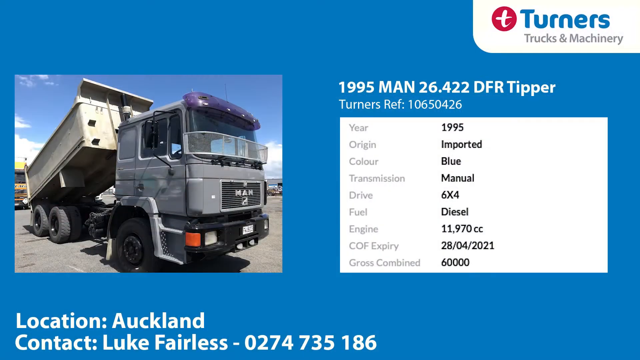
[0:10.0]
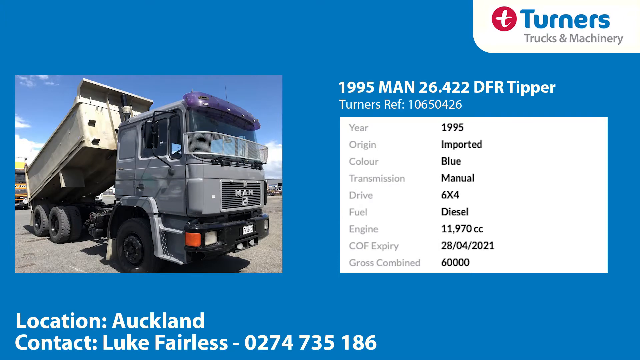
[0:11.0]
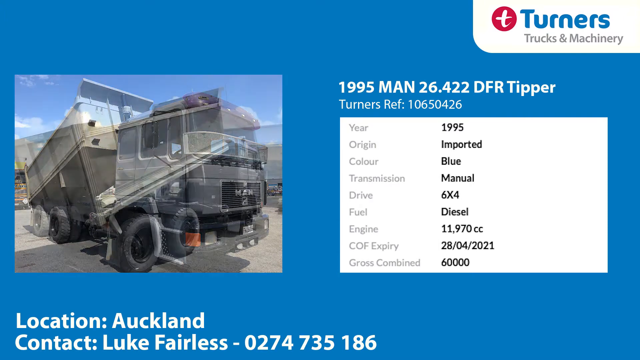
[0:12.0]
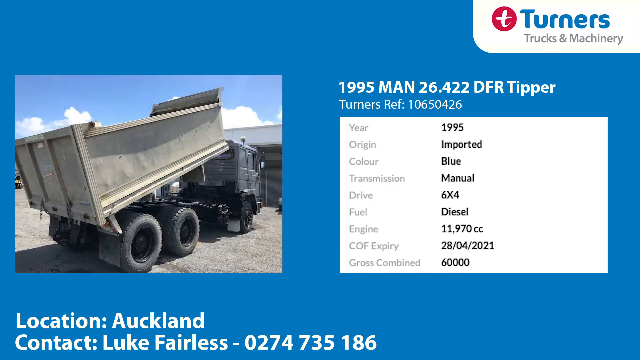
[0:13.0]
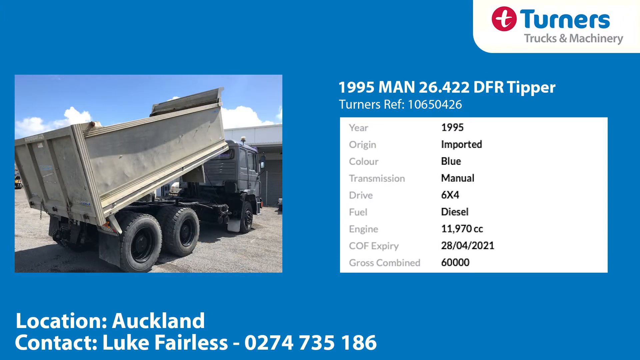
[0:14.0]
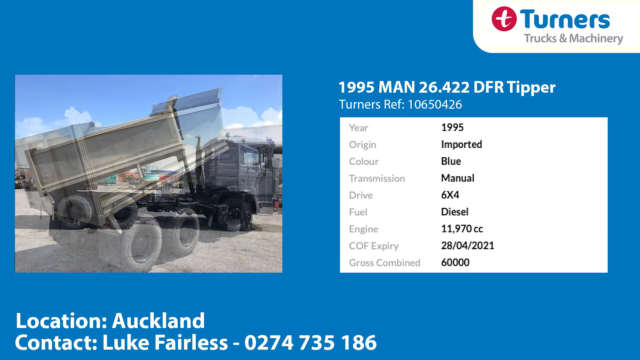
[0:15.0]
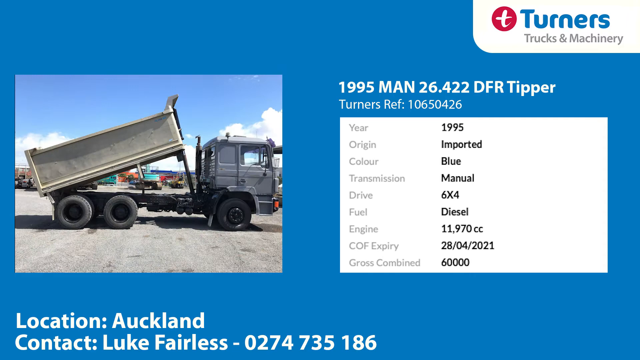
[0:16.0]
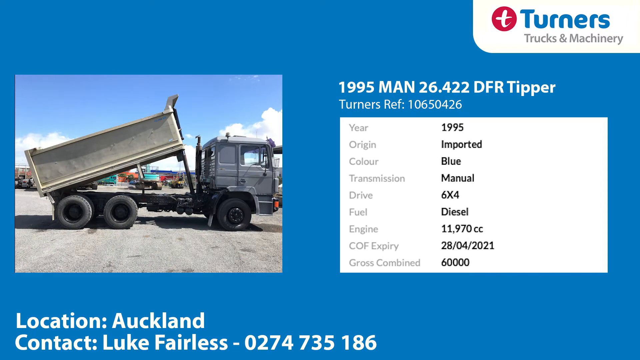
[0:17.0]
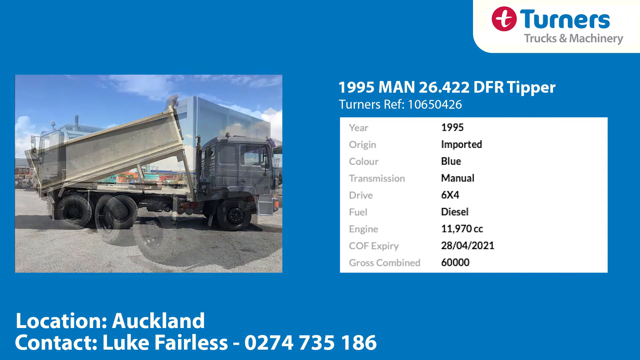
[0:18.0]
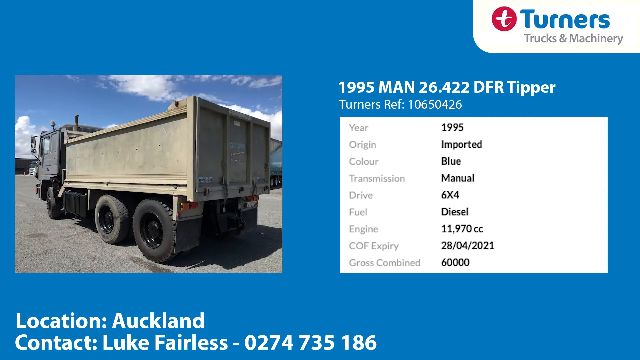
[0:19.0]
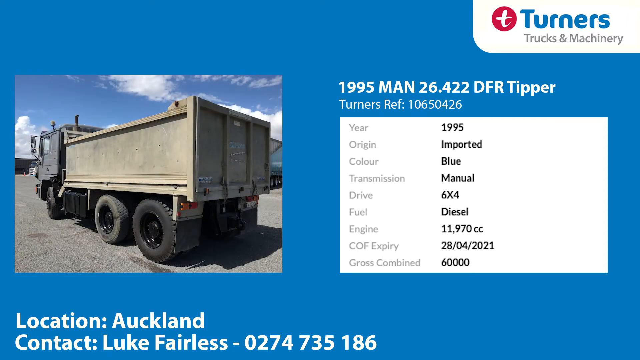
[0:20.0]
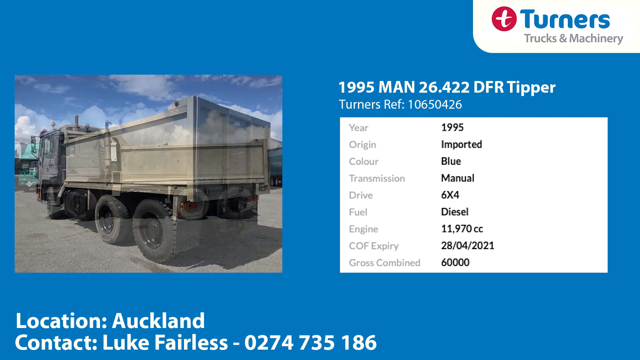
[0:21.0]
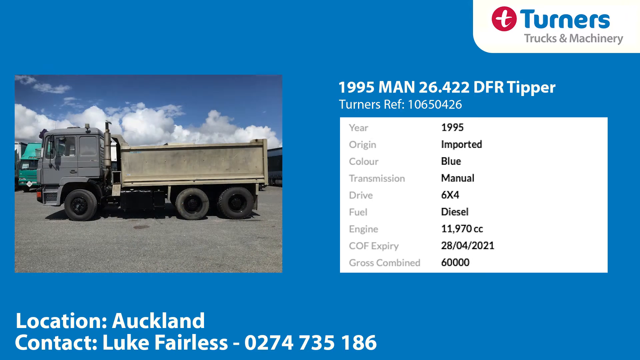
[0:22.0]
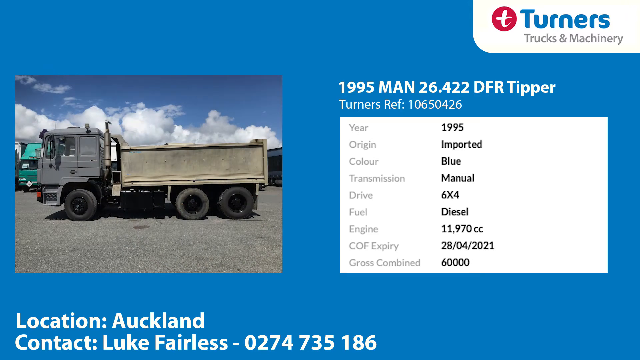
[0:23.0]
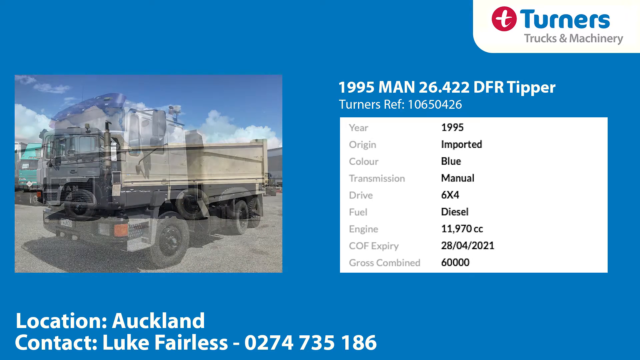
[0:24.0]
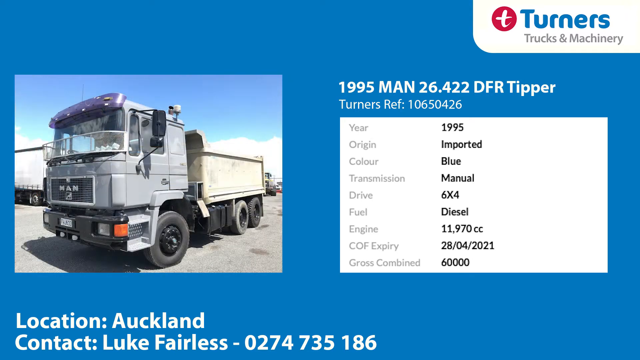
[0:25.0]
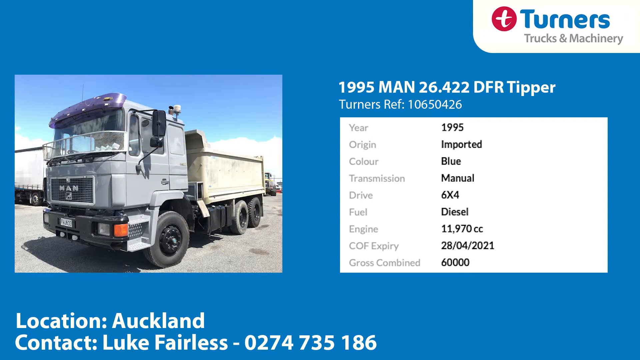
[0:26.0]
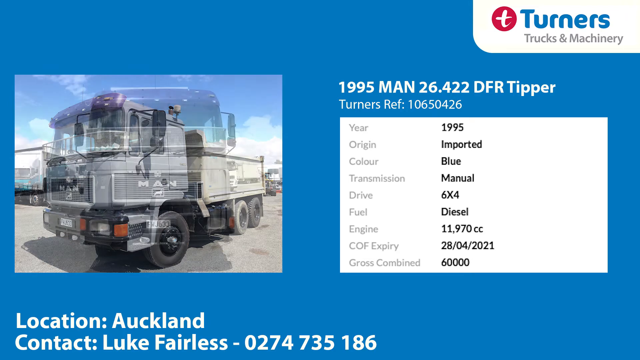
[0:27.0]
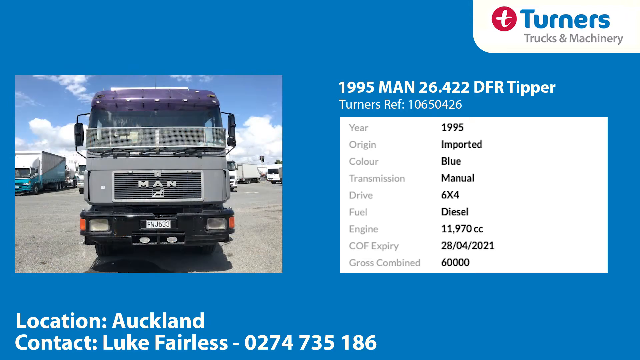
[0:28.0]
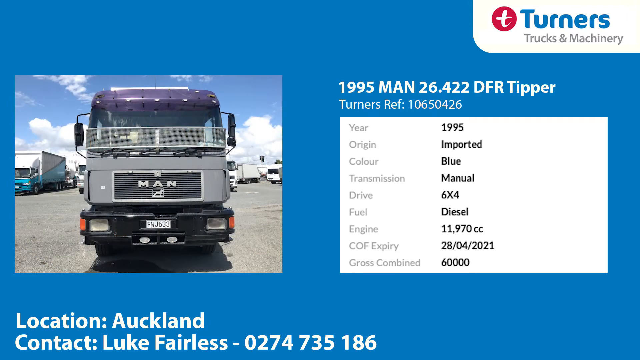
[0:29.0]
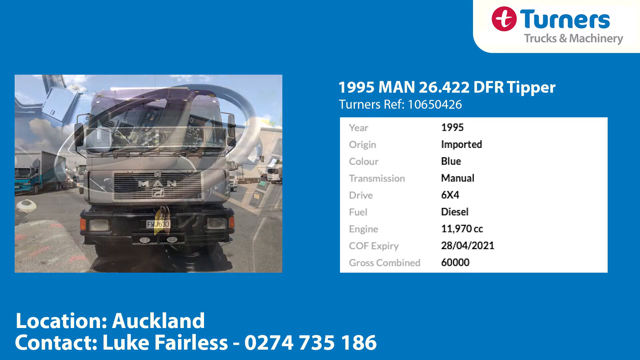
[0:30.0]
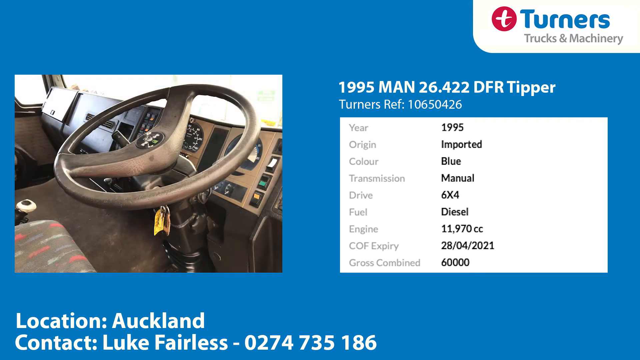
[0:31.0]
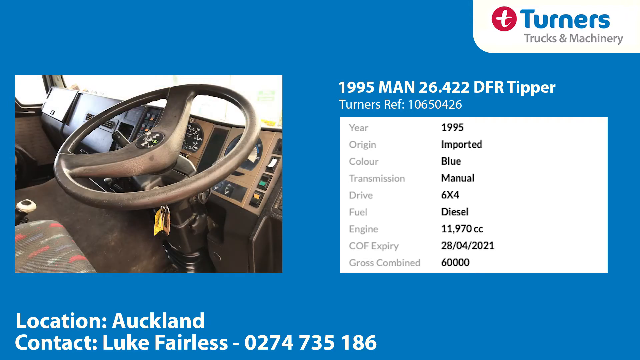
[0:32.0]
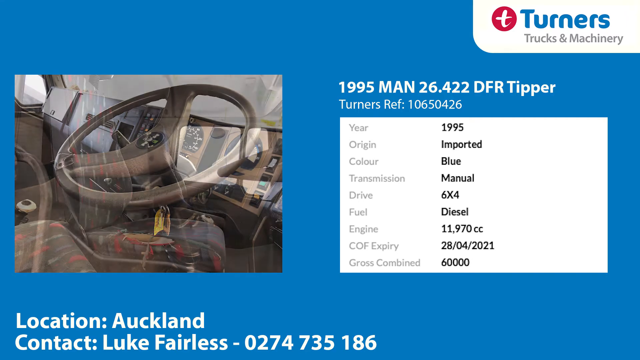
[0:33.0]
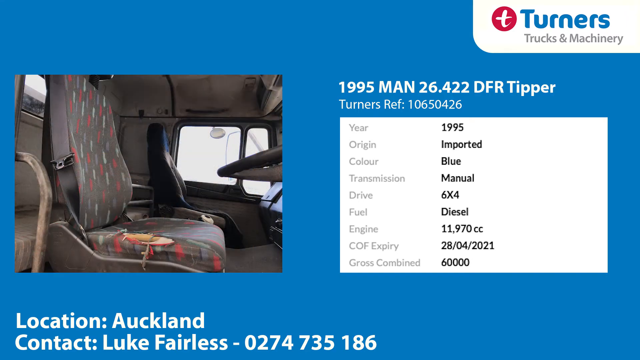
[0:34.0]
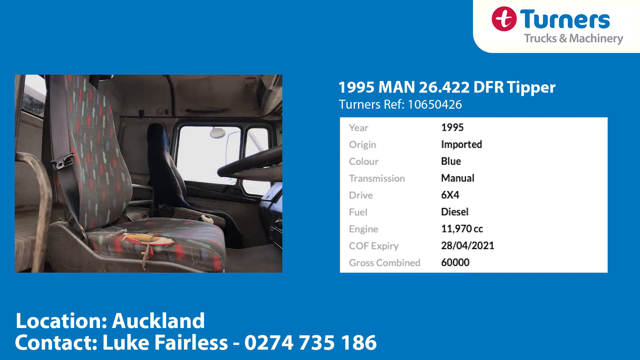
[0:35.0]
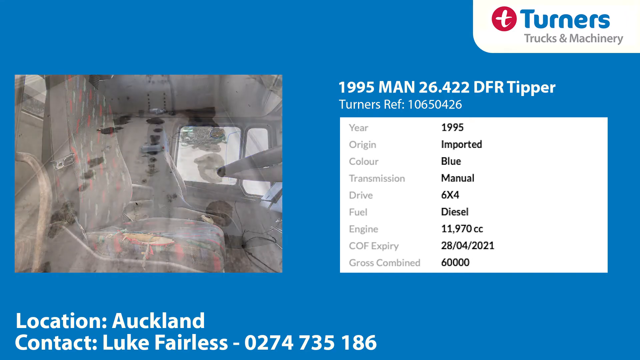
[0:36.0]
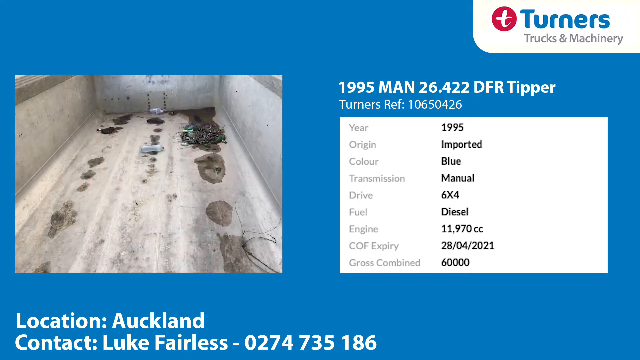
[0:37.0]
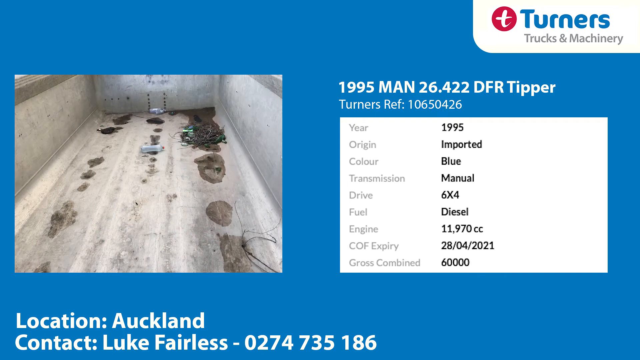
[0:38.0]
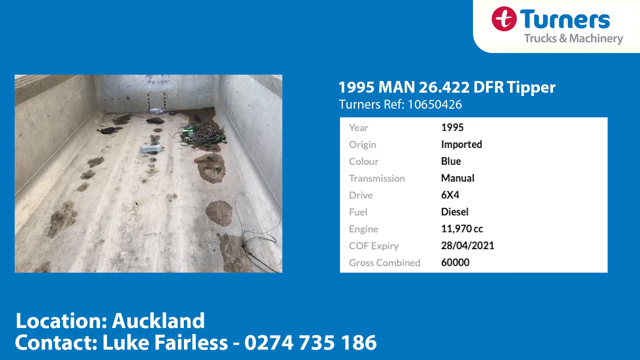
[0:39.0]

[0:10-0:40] An image of a truck appears with its details listed: the year is 1995, it has a manual transmission and 6x4 drive, the fuel is diesel, the engine size is 1197cc, and the expiry date is in 2021. The location is Auckland, the contact is Luke Fairlie, and a number is given to contact him. Another truck image shows the 1995 Man truck. The steering wheel, the inside of the cabin and the seating are visible, as well as the inside of the truck at the rear.